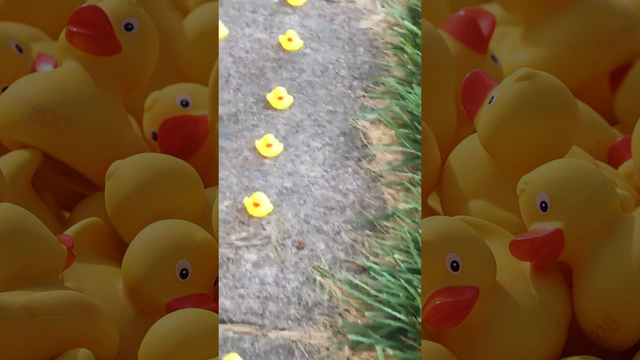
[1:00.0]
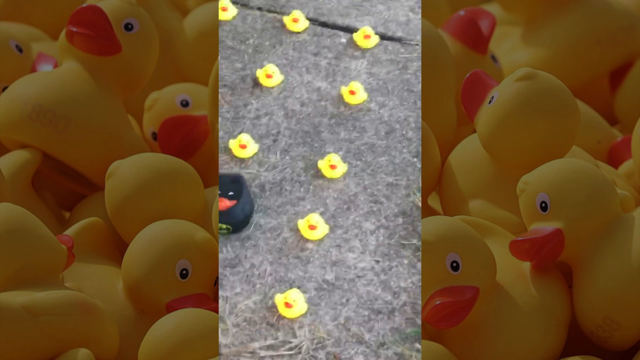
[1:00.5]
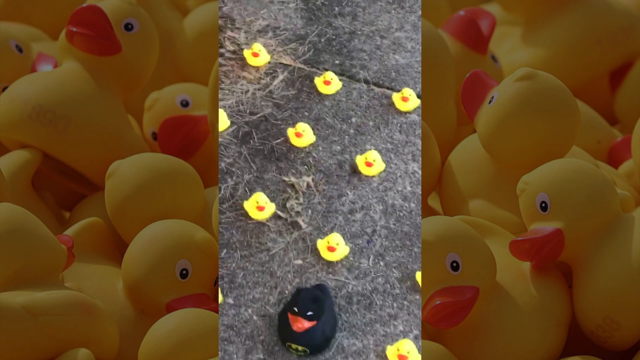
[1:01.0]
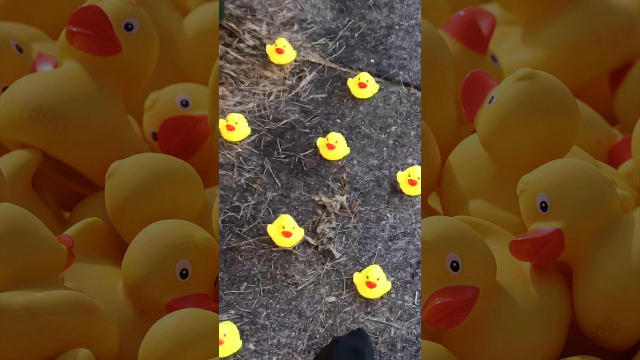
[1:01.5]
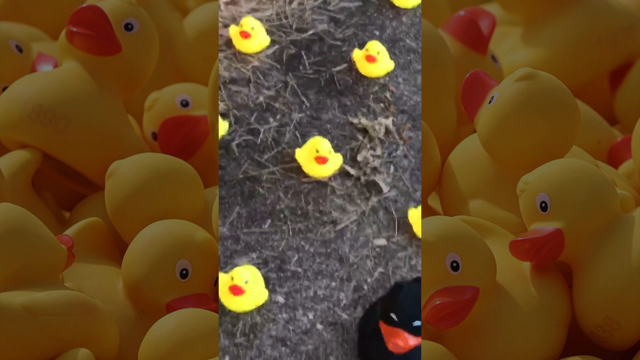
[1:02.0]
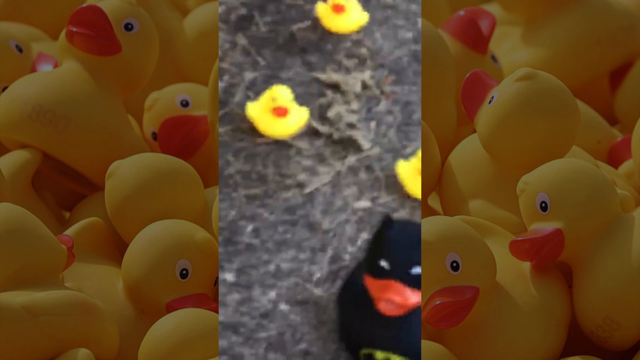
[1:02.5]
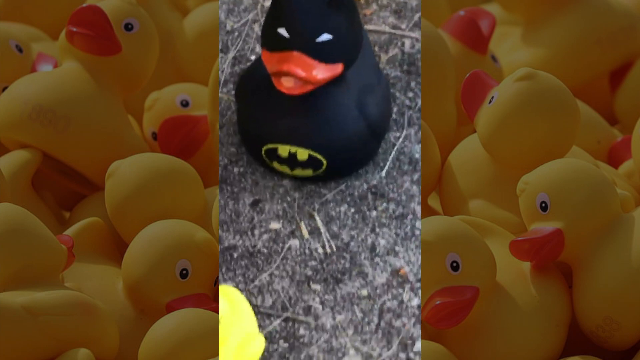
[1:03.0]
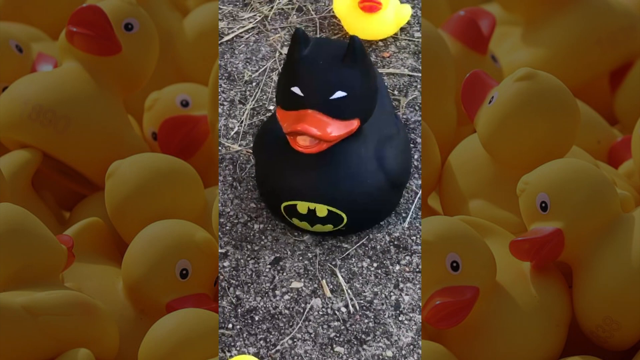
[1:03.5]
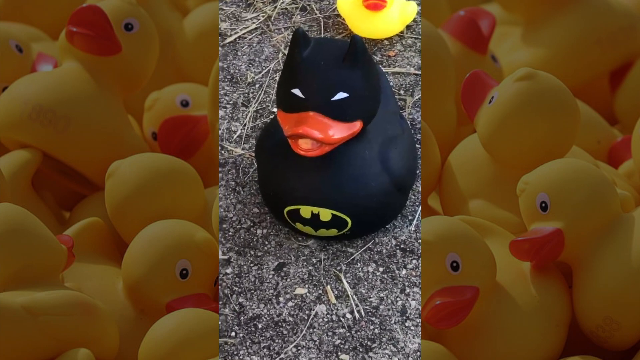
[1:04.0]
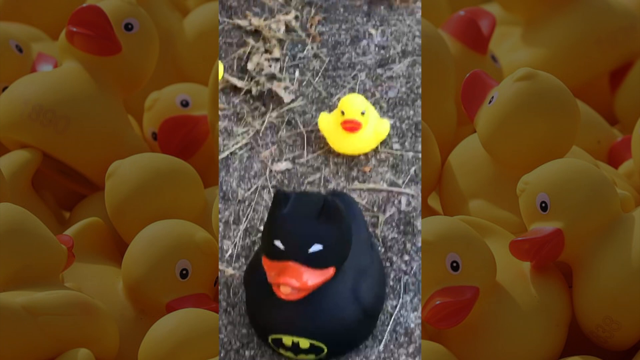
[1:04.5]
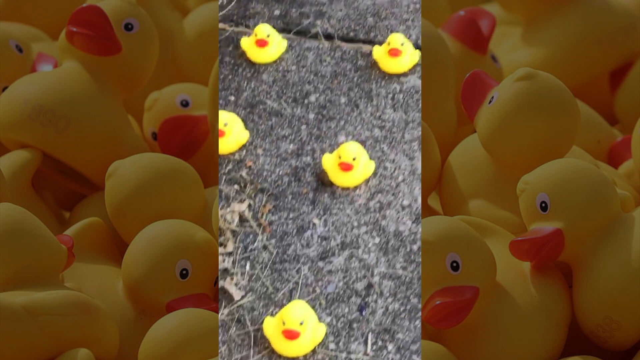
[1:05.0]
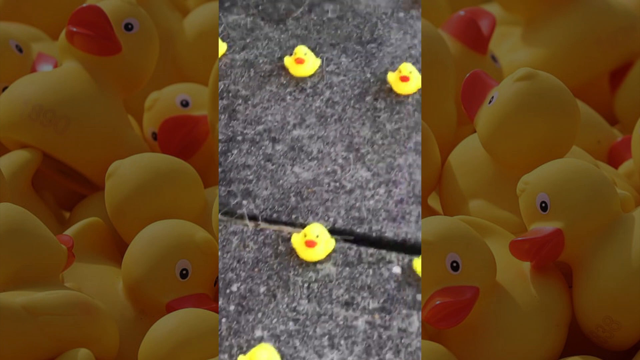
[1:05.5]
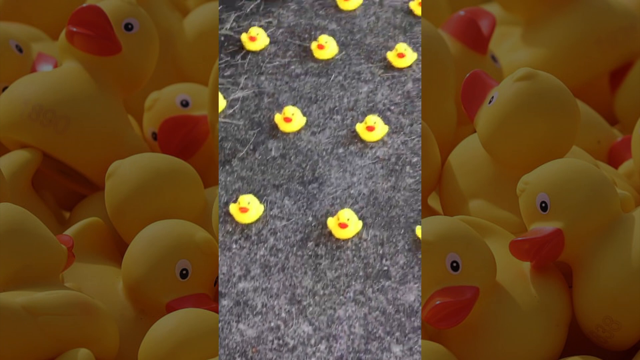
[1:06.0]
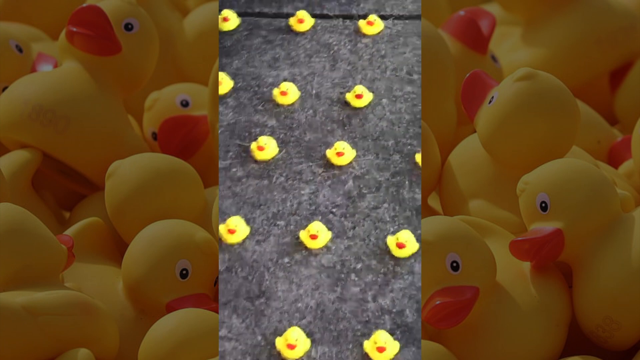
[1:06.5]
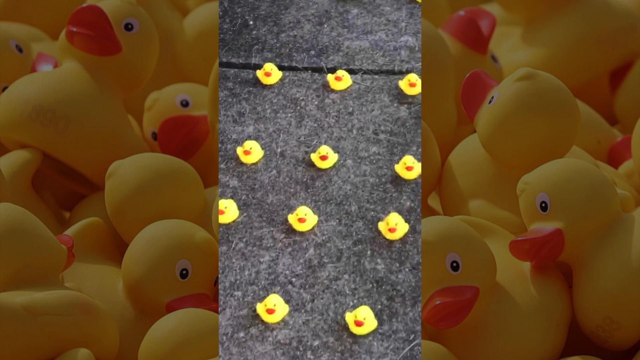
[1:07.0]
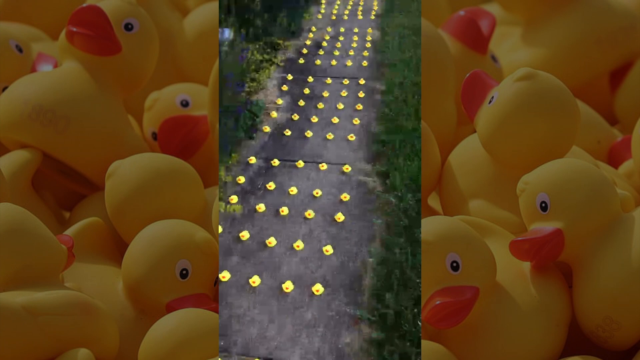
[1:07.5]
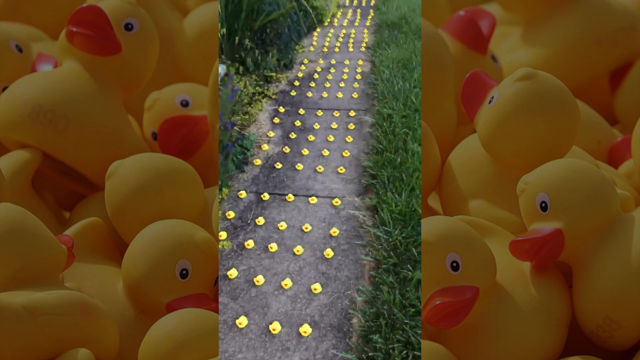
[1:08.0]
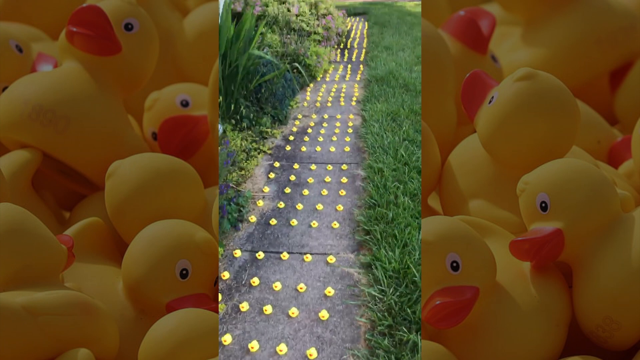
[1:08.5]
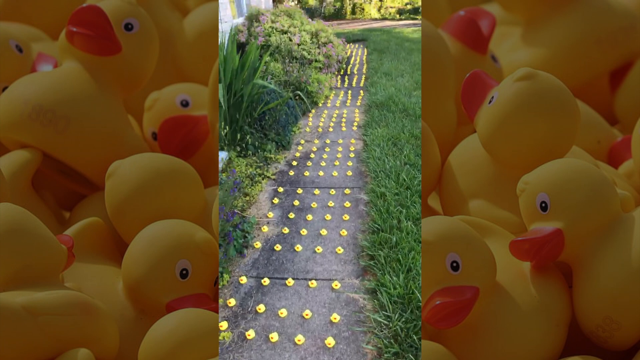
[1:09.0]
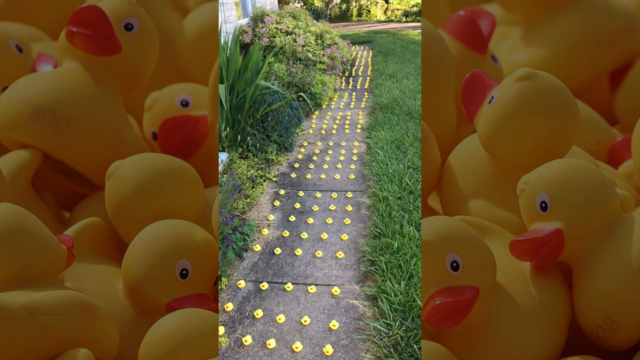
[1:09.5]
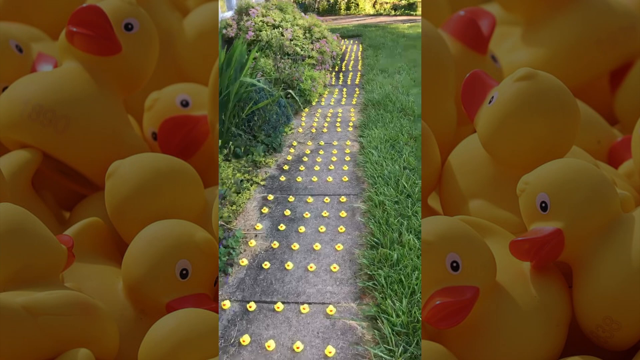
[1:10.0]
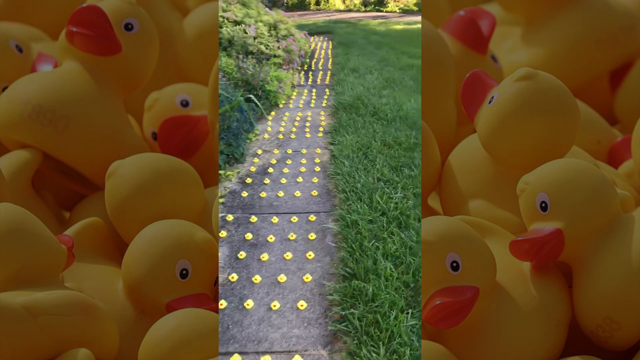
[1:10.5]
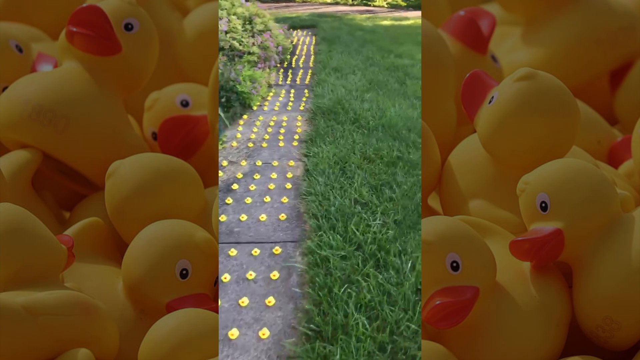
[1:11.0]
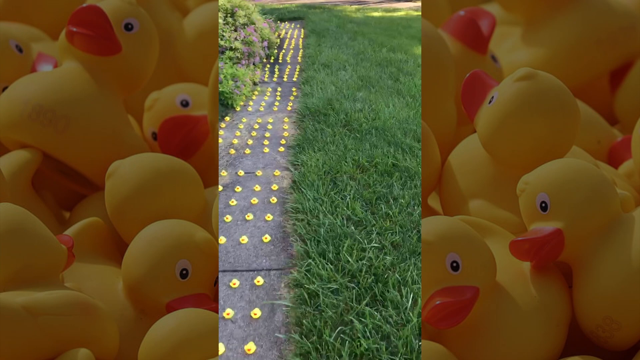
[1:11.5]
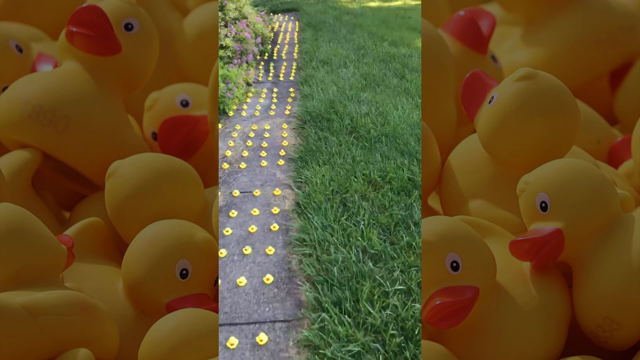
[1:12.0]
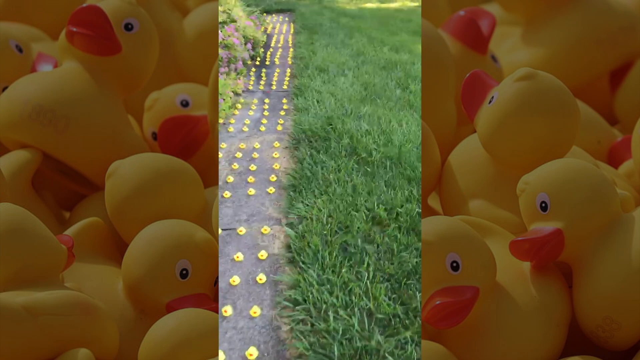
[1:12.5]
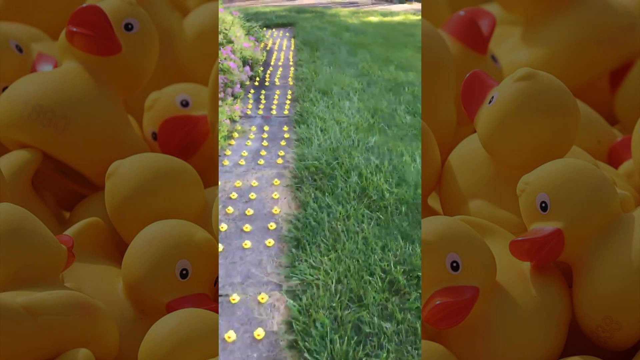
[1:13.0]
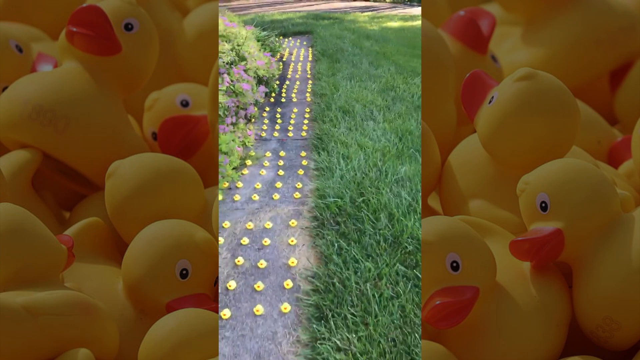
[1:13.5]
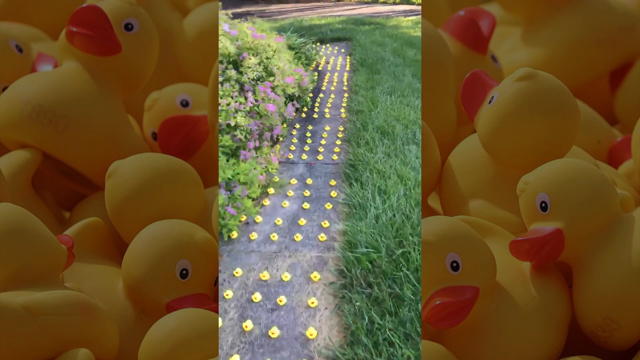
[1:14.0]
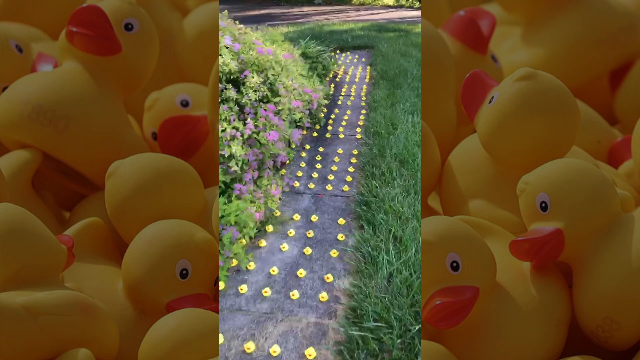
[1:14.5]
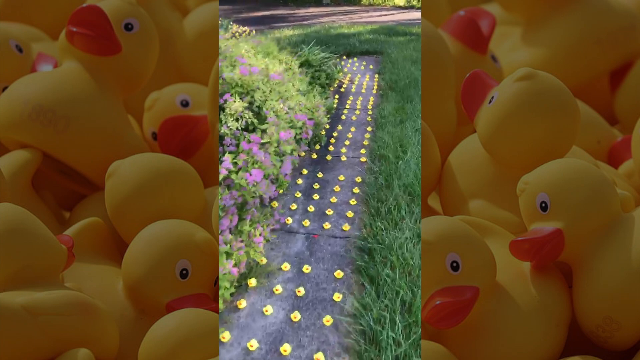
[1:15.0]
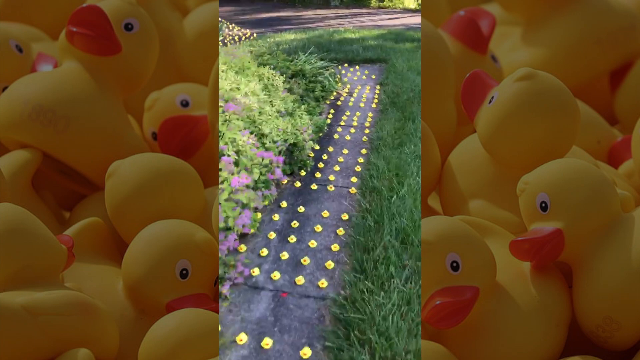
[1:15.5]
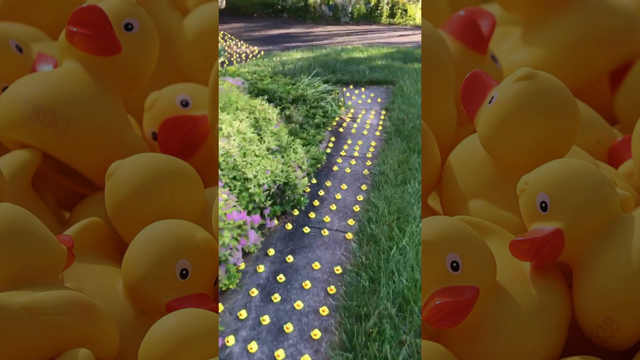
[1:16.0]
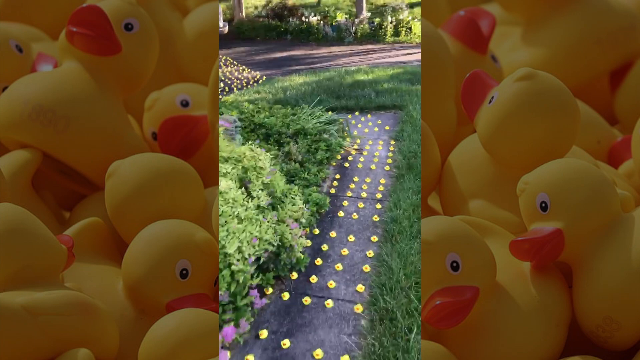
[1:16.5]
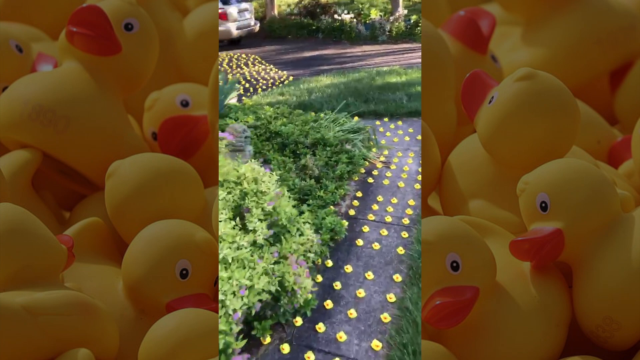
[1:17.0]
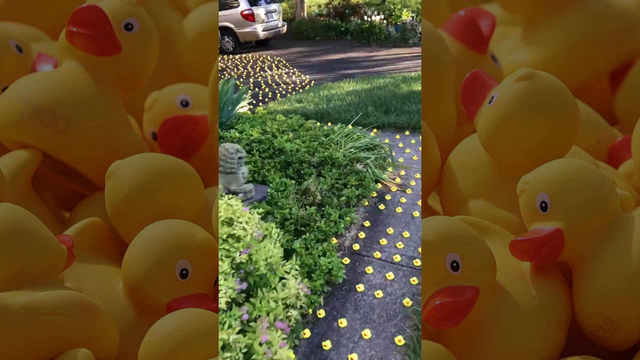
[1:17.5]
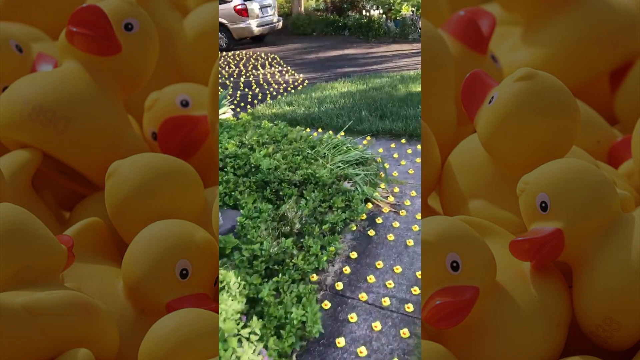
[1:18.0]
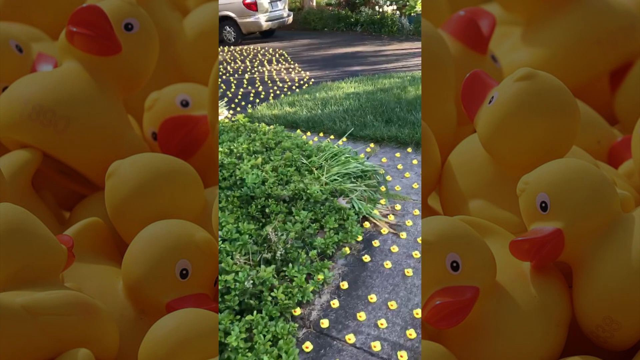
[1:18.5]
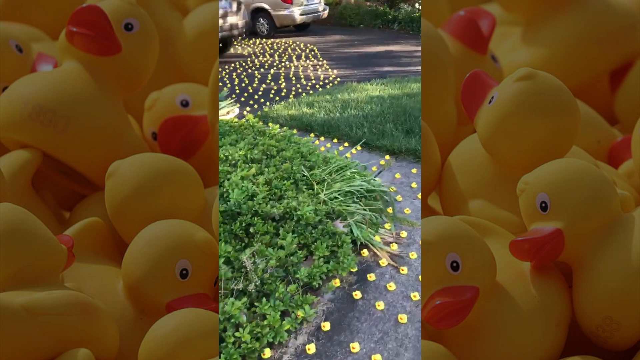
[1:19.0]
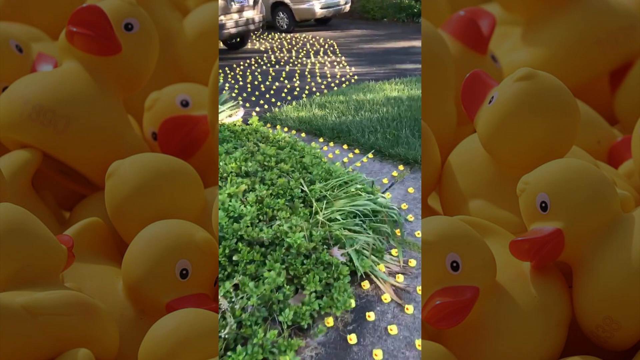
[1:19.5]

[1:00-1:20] As the person walks, he zooms in again on the black Batman rubber ducky. Continuing to walk, he zooms out, showing the lineup of rubber duckies along the walkway, then zooms out even further as the lineup continues along the walkway. There are some plants on the left-hand side and grass on the right. The person keeps walking forward past the seemingly never-ending line of rubber duckies, then makes another left on the walkway. The camera is not held very stably; it moves around, giving a view of basically everything around it. The person reaches what appears to be a driveway with two silver cars, where the lineup of rubber duckies gets larger and seems to go in between the cars.